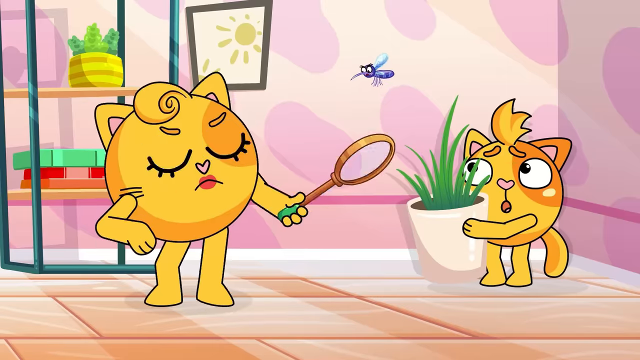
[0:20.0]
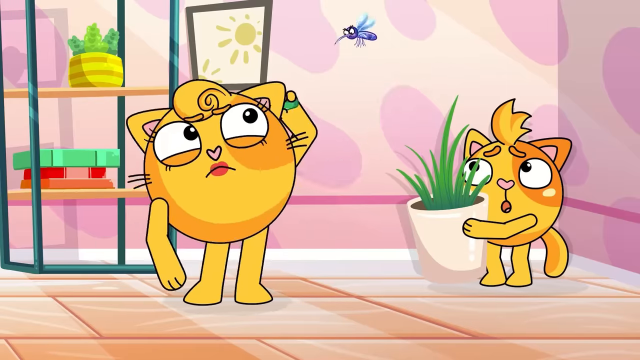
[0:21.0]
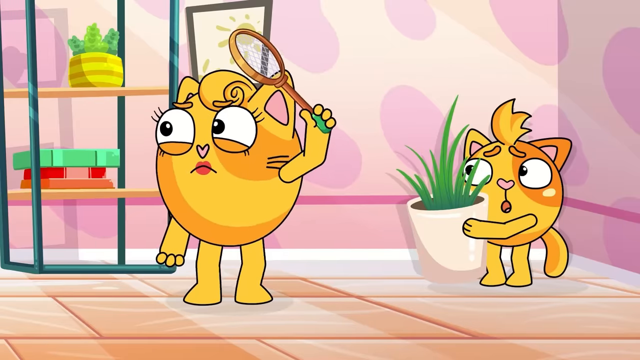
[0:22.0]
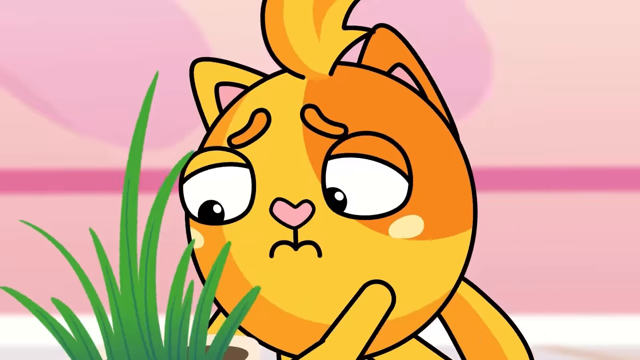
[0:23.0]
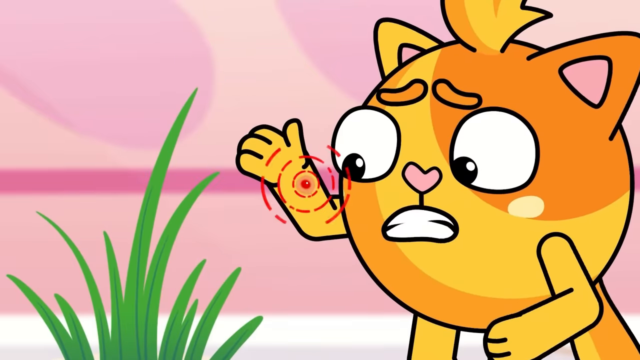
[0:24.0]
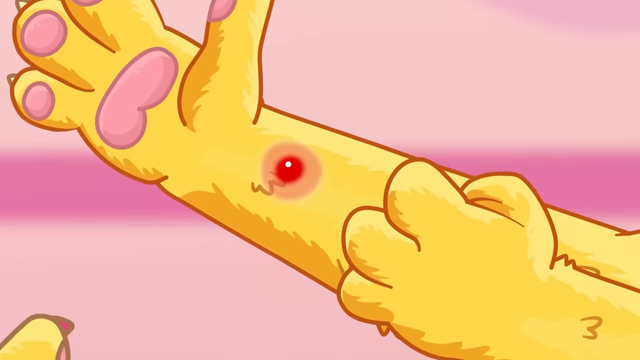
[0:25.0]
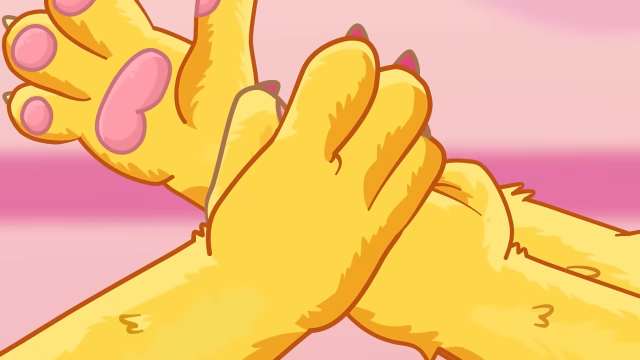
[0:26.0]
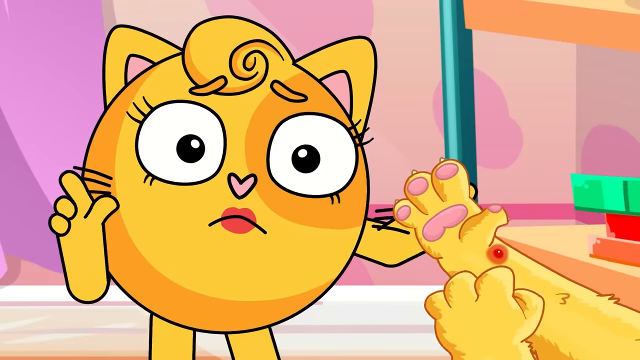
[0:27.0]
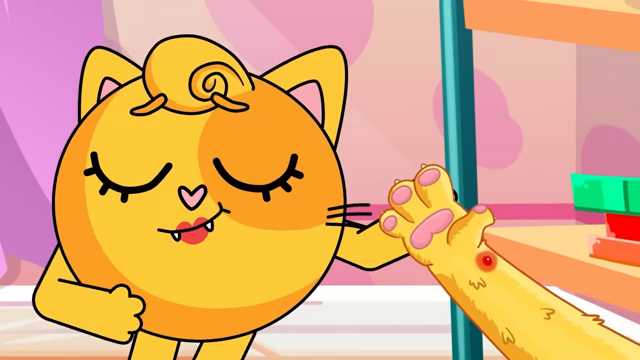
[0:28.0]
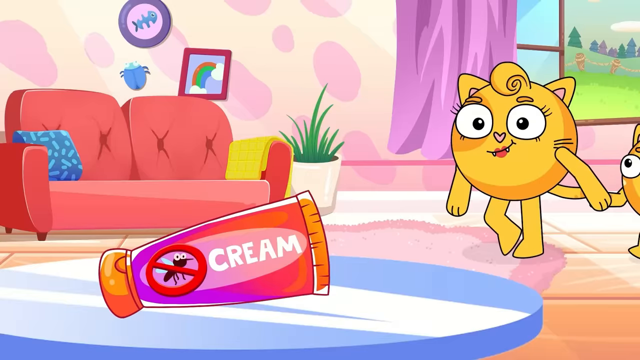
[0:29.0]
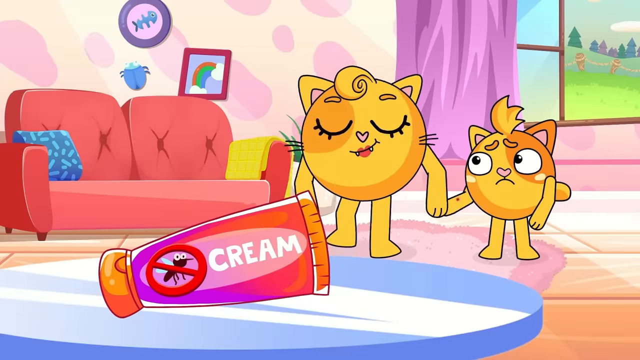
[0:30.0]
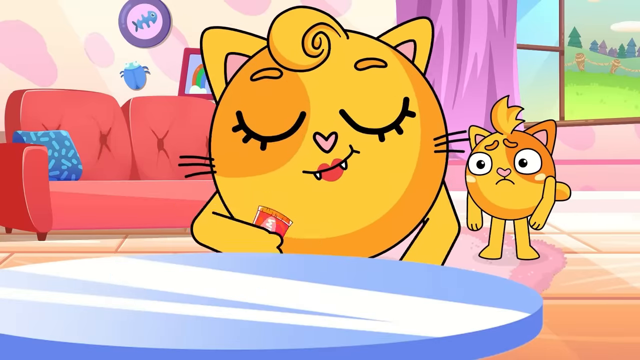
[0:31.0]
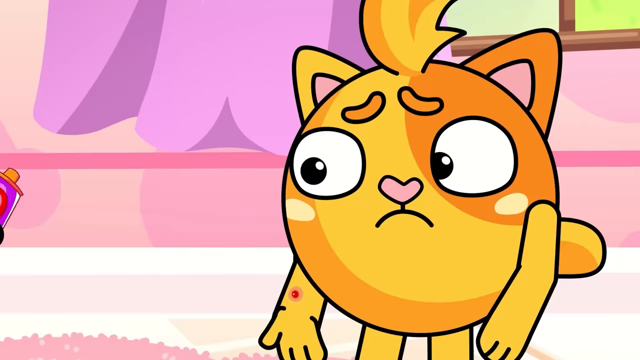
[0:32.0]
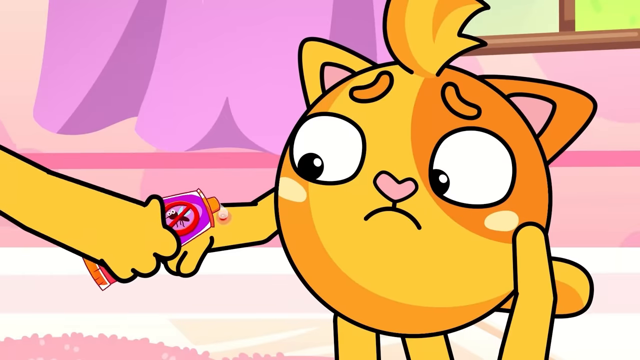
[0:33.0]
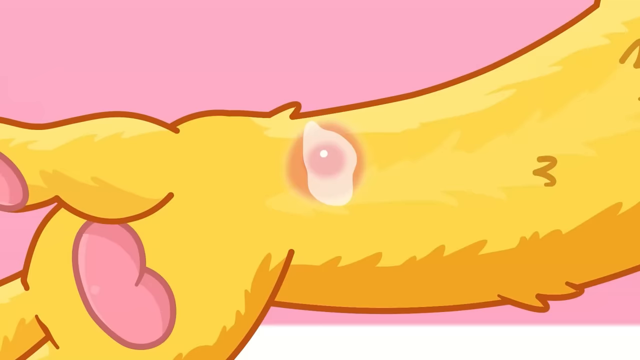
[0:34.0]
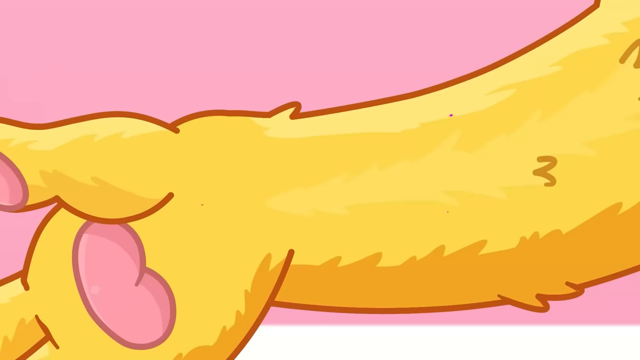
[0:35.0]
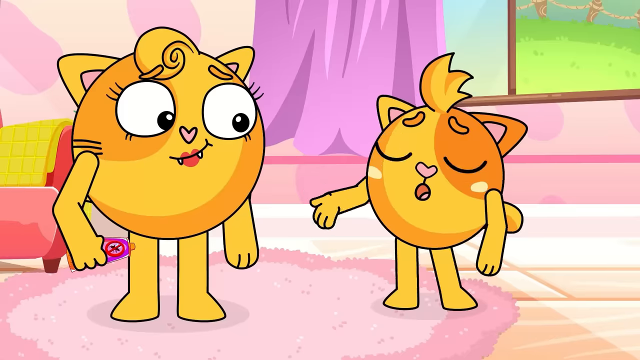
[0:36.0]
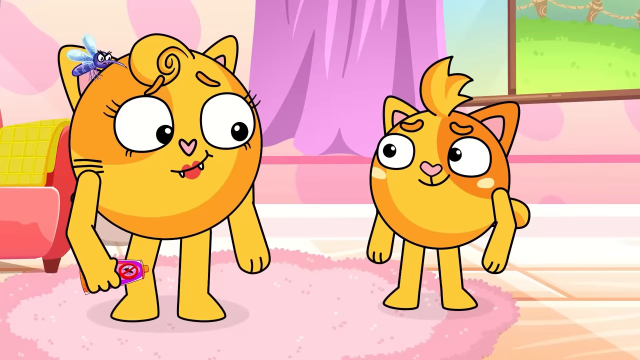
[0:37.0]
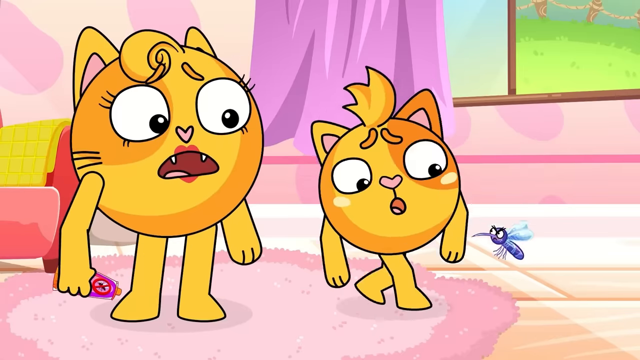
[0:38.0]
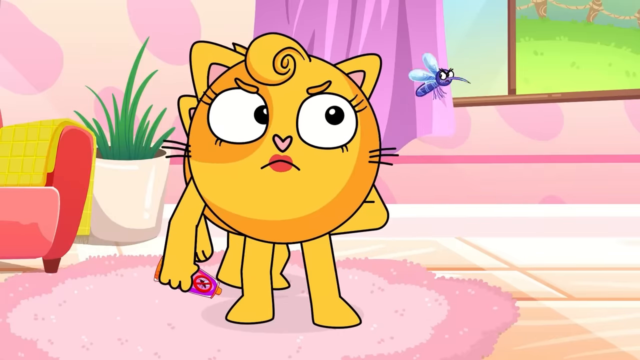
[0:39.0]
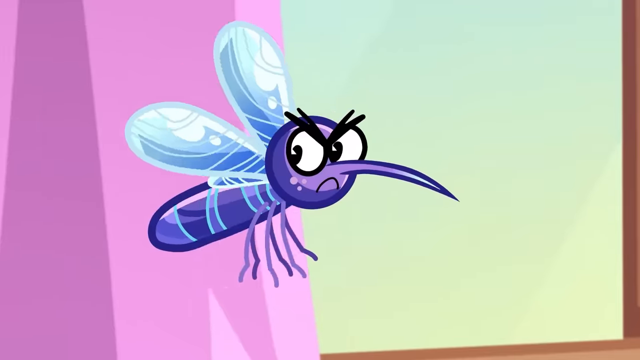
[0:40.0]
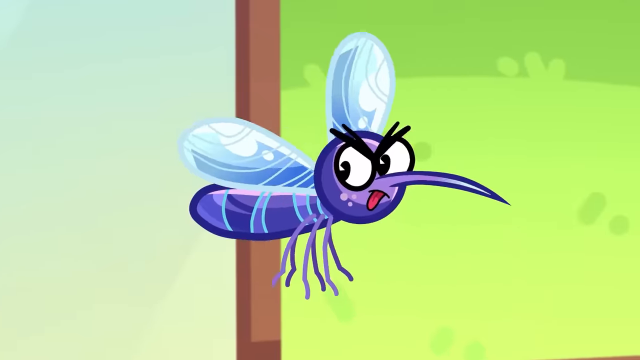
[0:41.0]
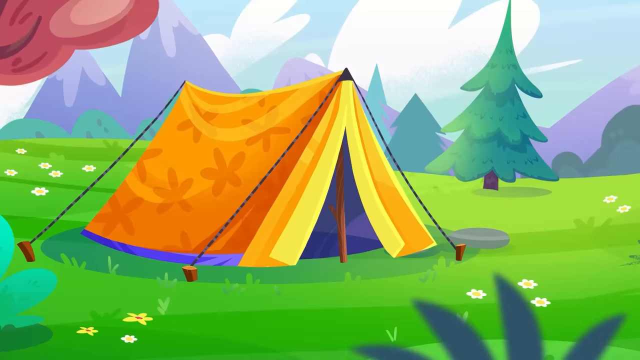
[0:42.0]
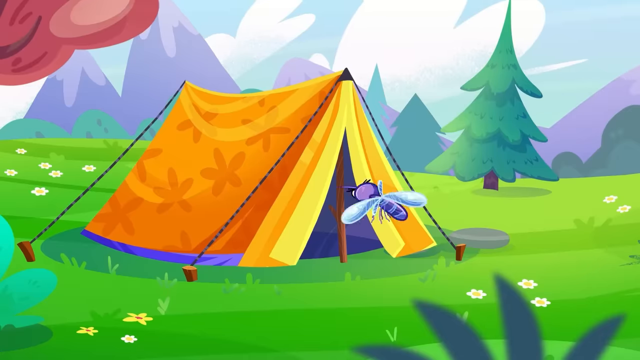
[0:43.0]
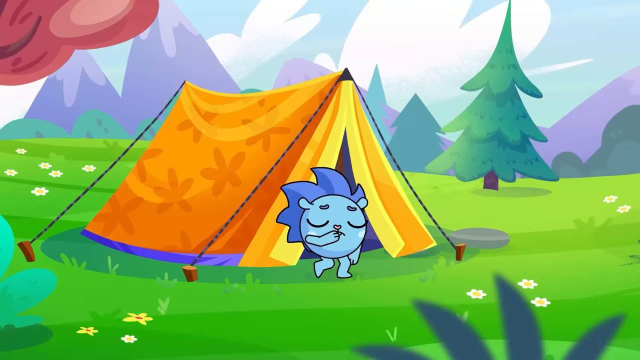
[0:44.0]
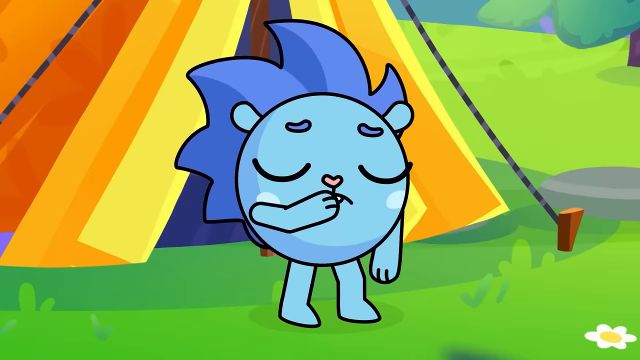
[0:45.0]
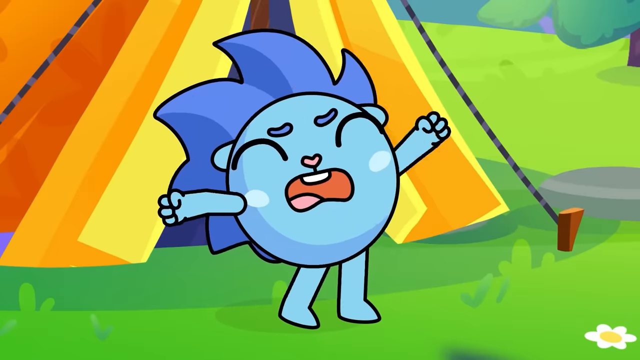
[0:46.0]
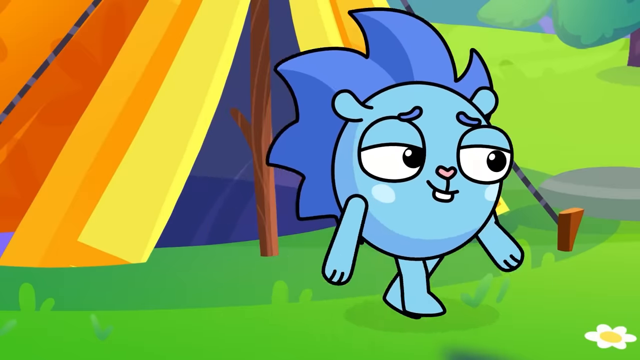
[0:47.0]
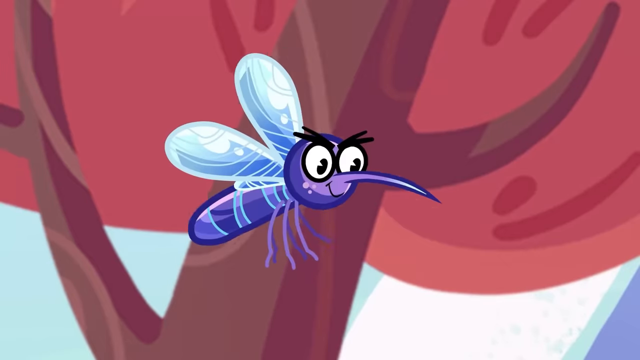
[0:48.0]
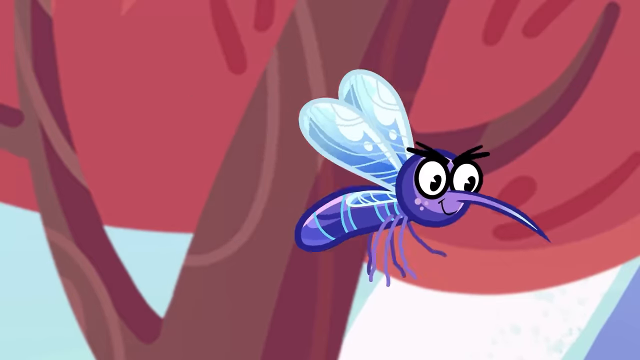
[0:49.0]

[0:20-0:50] The mom cat swats at the mosquito, angry with her brows furrowed, and leaps forward. The scared little cat hides behind a potted plant with green leaves. There is a very large shelf of sorts with wooden shelves, red books, a green book, a yellow pot with a green plant, and a yellow frame. The little cat puts down the potted plant and exclaims with his mouth wide open, looking concerned at the mosquito bite on his arm. He reaches a paw toward the bite, and the mom says, "no, do not scratch it. We have cream." She grabs the cream and applies it; a little squirt of gel lands on the bite, and then the bite is gone. The little cat fears the mosquito while the mom cat protects him. The mosquito sticks out his tongue and goes outside, where there is what appears to be a blue hedgehog, or perhaps a porcupine. The mosquito sees him and seems to have found a new target, and chases him down.